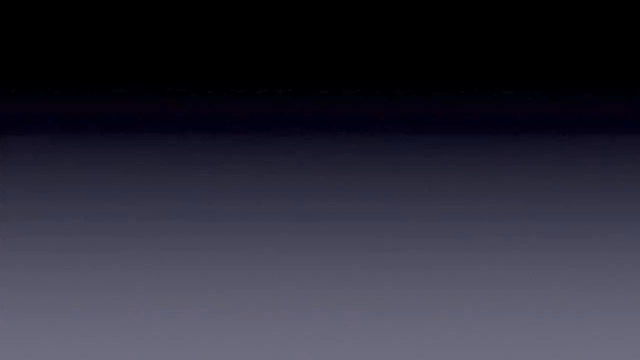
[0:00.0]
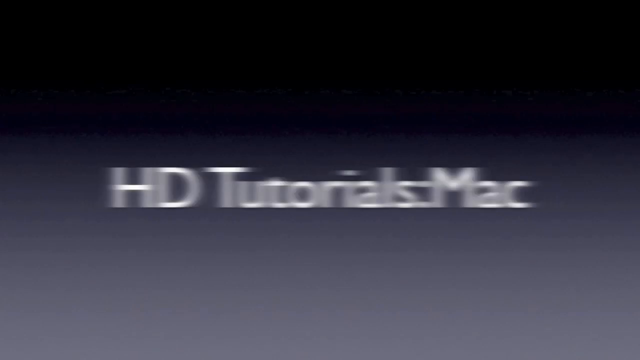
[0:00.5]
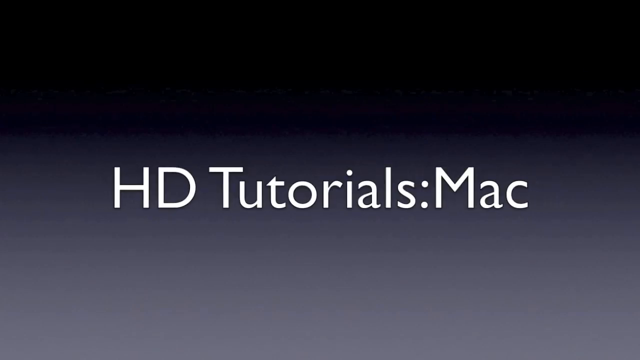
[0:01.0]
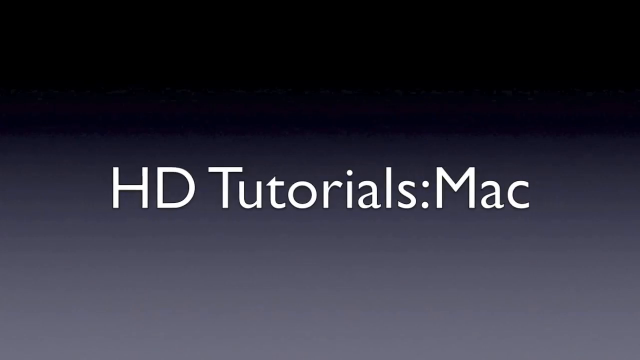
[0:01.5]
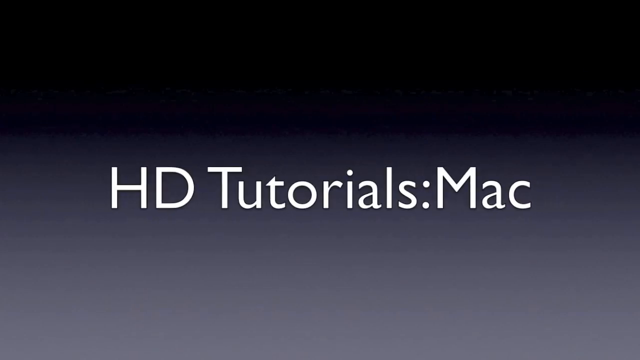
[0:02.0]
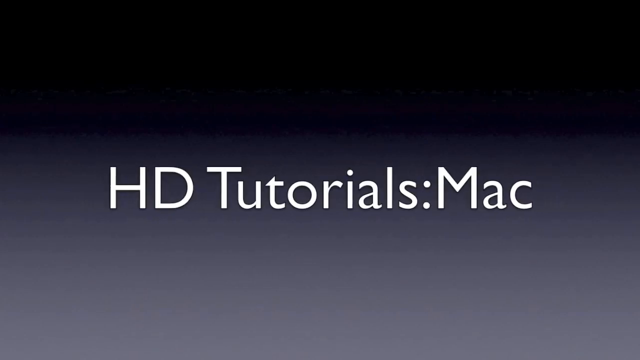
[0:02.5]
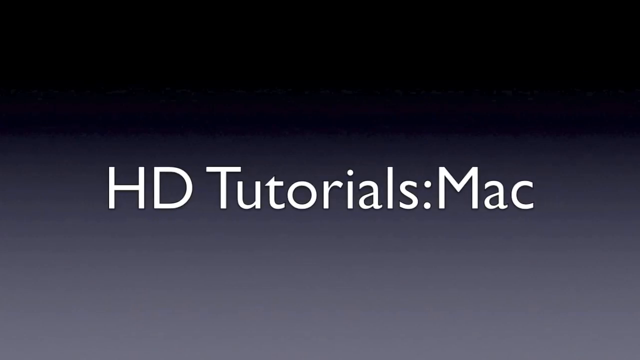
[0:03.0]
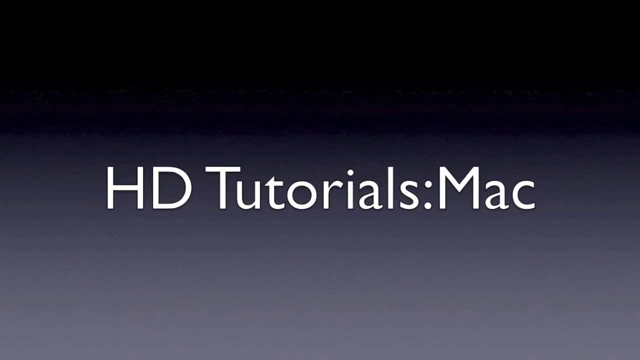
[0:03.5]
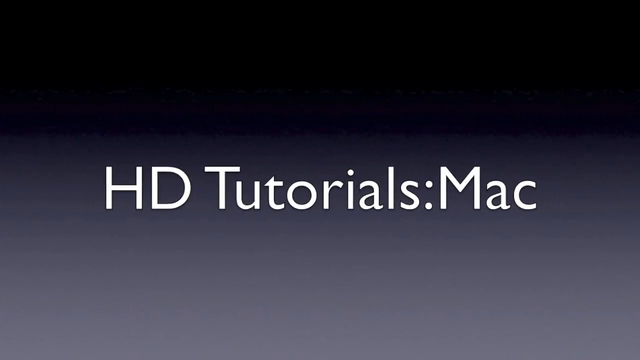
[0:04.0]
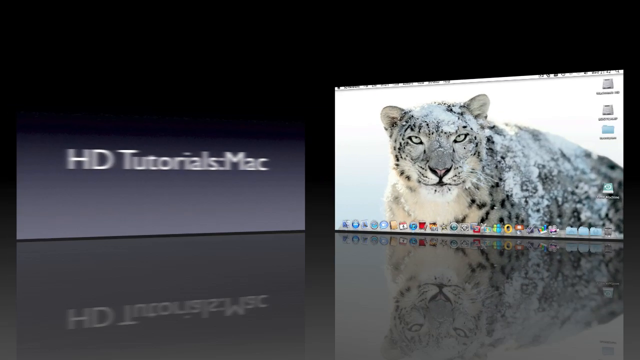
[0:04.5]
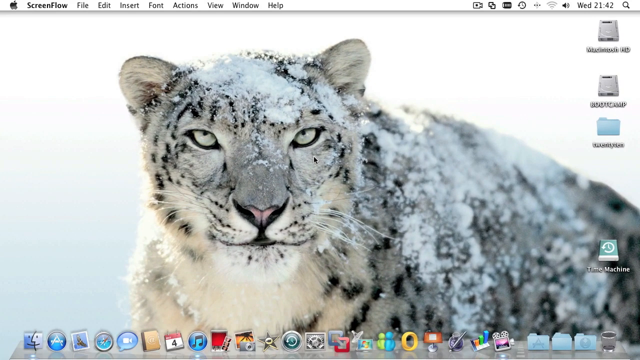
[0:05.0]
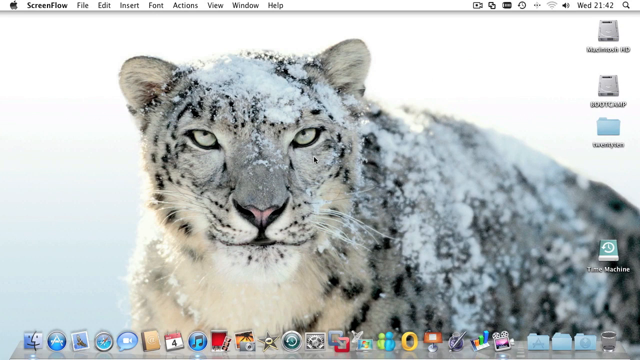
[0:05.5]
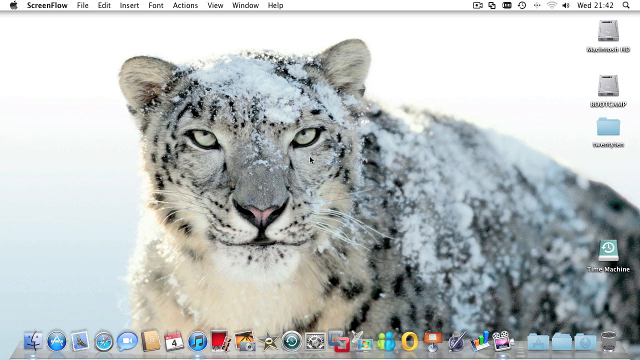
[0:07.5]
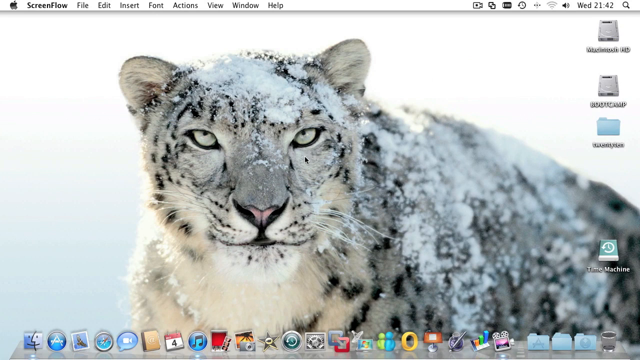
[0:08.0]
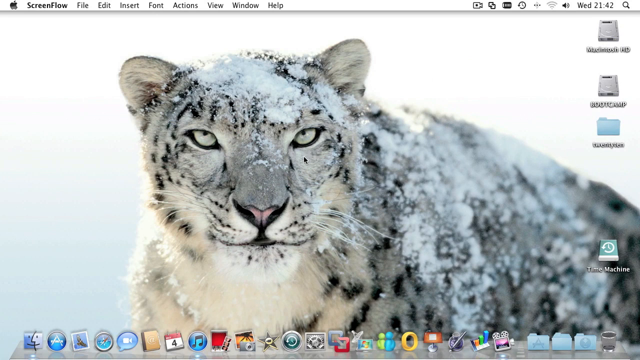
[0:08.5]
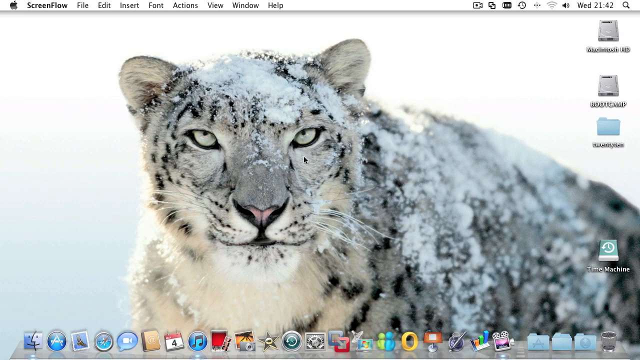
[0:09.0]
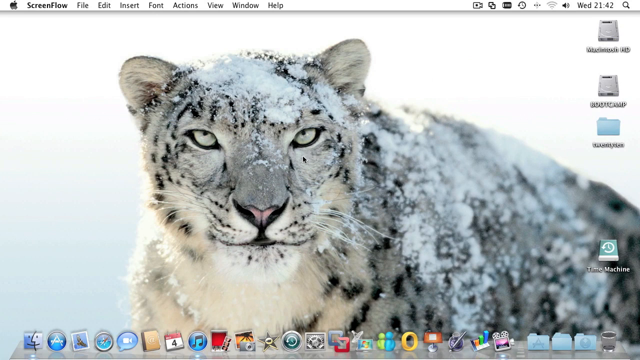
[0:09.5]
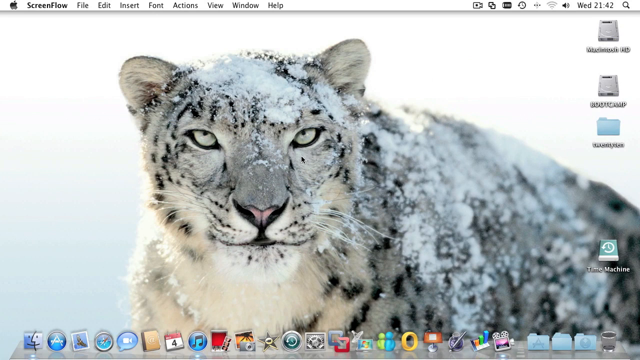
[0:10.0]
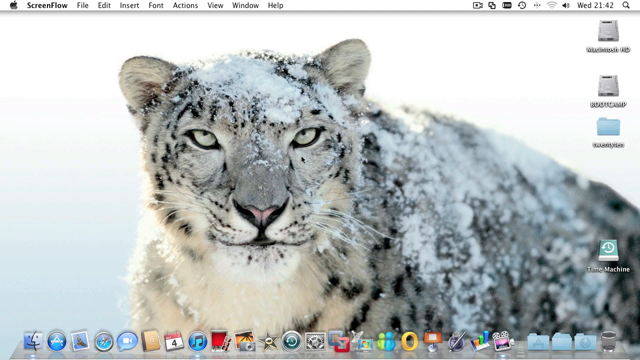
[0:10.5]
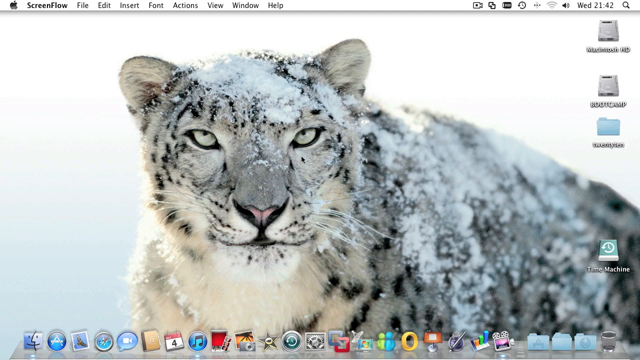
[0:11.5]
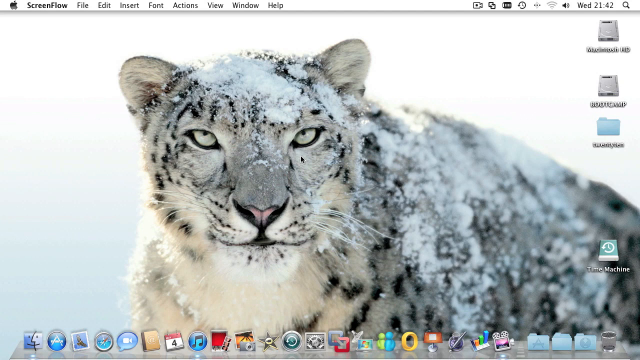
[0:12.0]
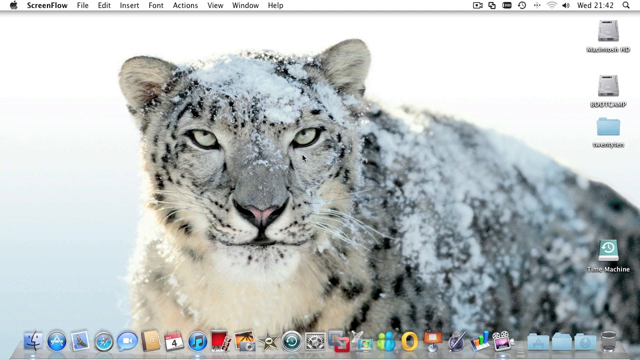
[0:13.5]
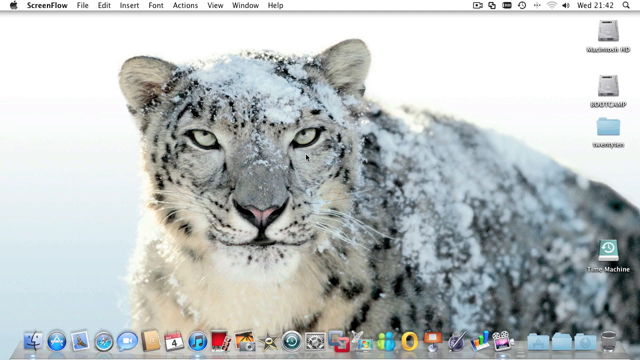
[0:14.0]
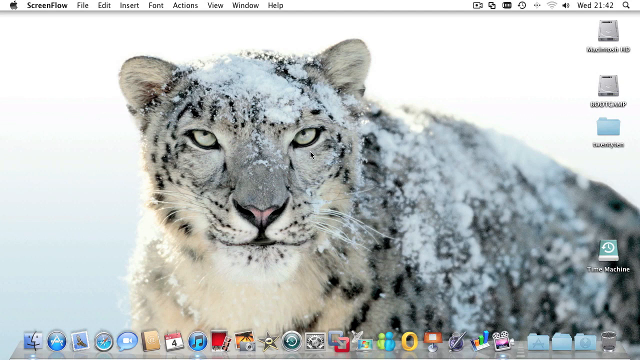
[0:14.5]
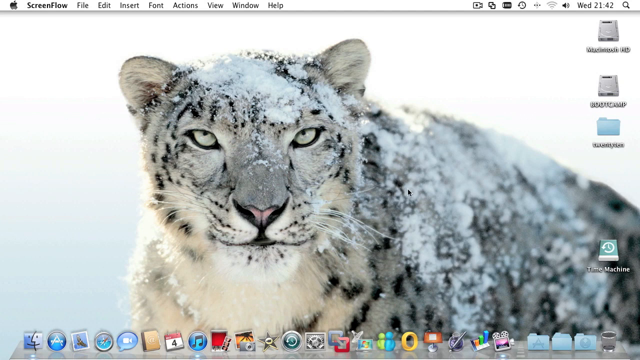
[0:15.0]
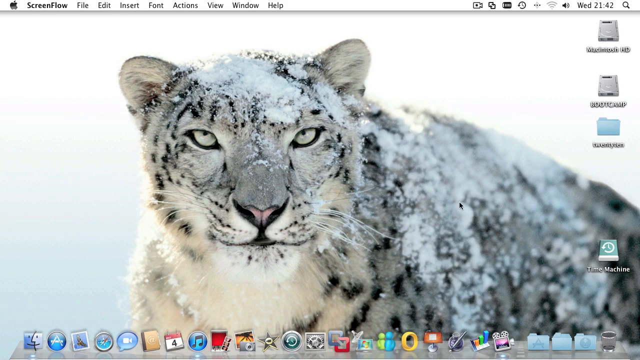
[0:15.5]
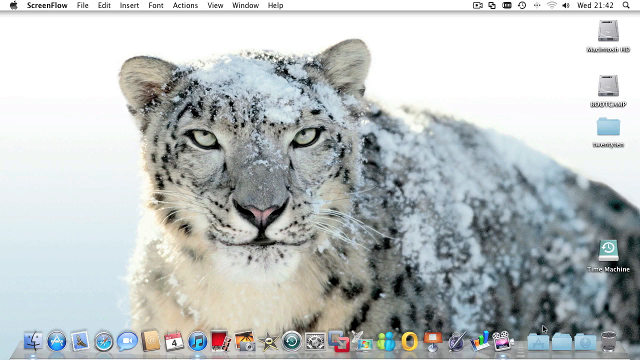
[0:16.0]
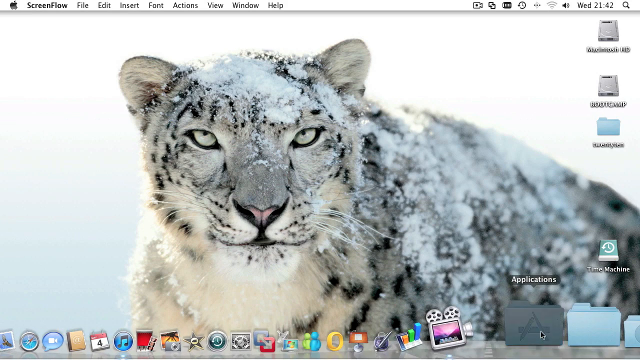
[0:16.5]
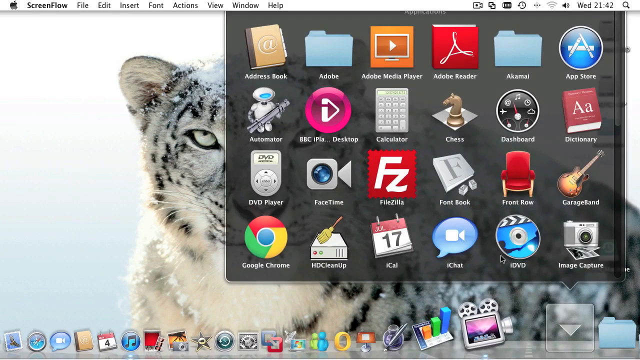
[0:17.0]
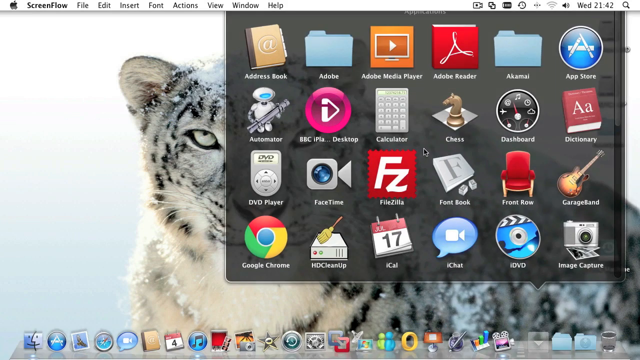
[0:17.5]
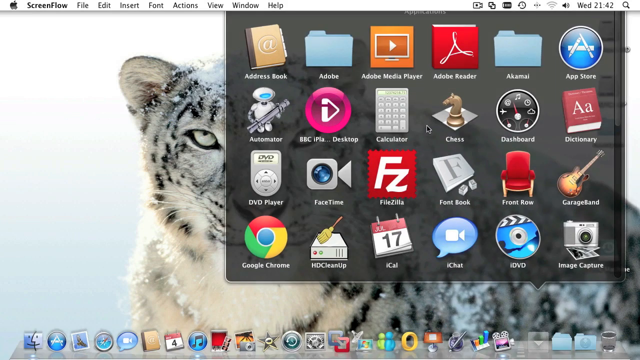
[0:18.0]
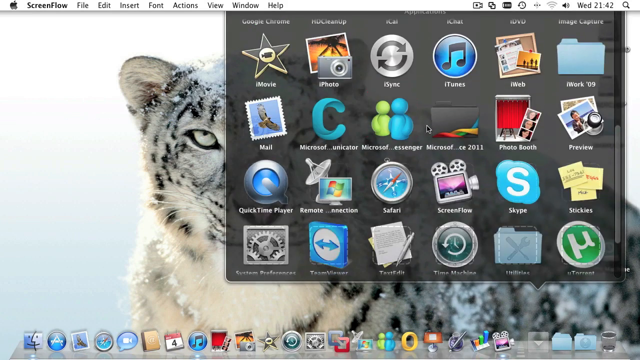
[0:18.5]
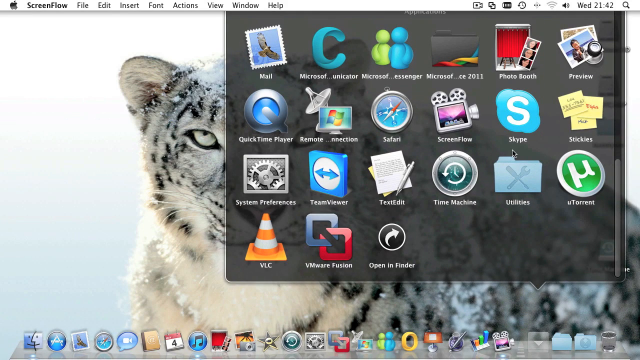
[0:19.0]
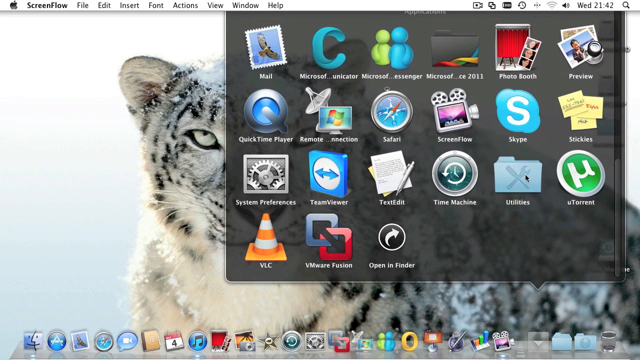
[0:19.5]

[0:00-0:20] The video opens with a line that reads "HD tutorials: Mac" on a black background that has an ombre of gray and white in the middle. It then fades into a Mac computer screen with a big gray tiger as the image. The tiger has snow all over its head, and its piercing eyes stare straight at the viewer. The Mac screen has icons on the bottom and on the side. The menu at the top reads "ScreenFlow, File, Edit, Insert, File, Action, View, Window, Help." On the desktop there is a Macintosh hard drive, Boot Camp, and a Time Machine logo. The icons at the bottom include Safari, Calendar, a small musical icon for iTunes, folders, and a trash can. The screen stays like this for a while with nothing happening, focused on the staring tiger. Then a mouse cursor moves and clicks on the Application folder, scrolls down, and clicks on the Utilities folder.